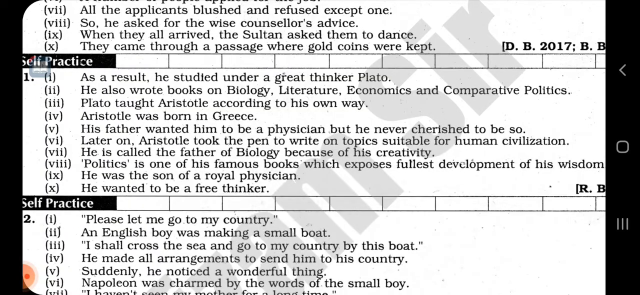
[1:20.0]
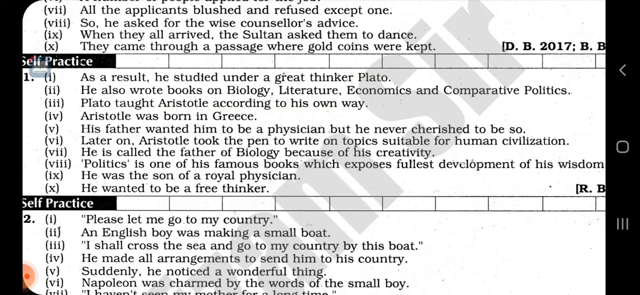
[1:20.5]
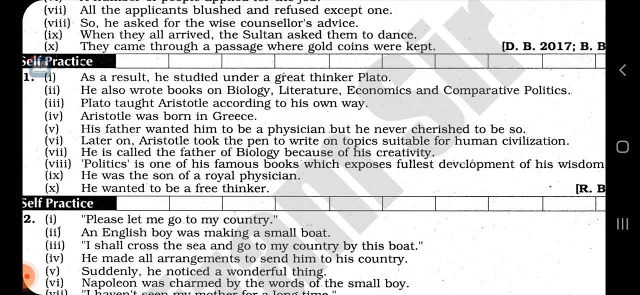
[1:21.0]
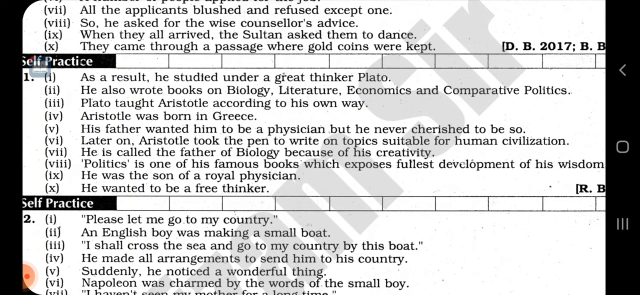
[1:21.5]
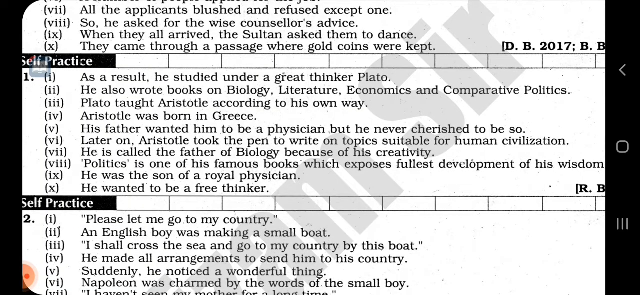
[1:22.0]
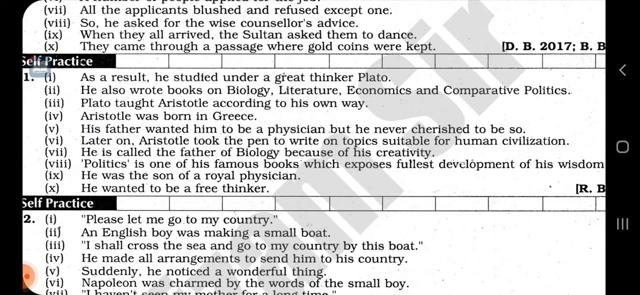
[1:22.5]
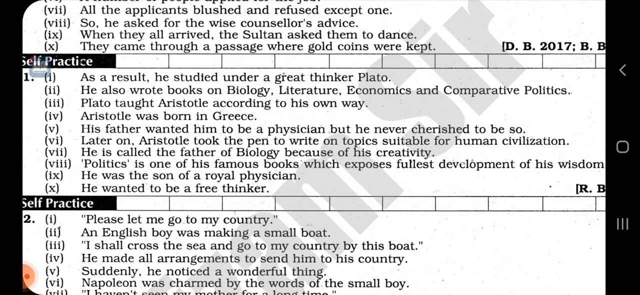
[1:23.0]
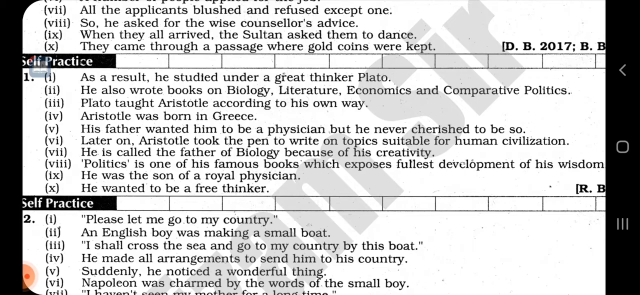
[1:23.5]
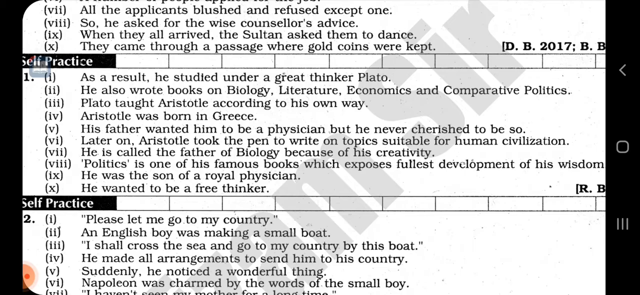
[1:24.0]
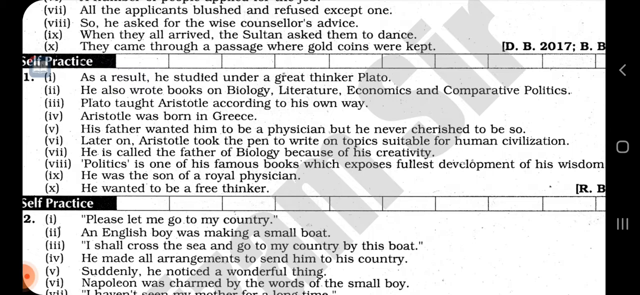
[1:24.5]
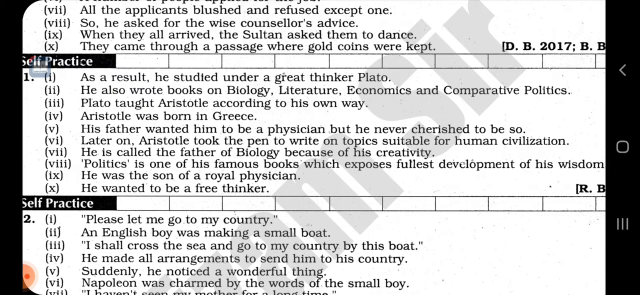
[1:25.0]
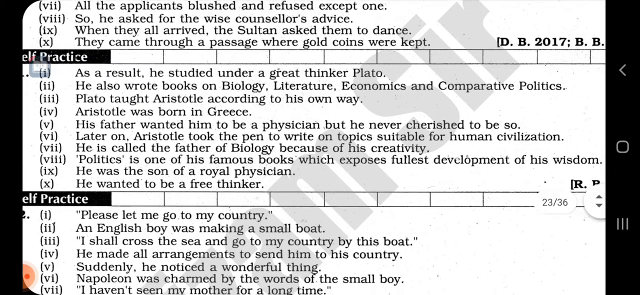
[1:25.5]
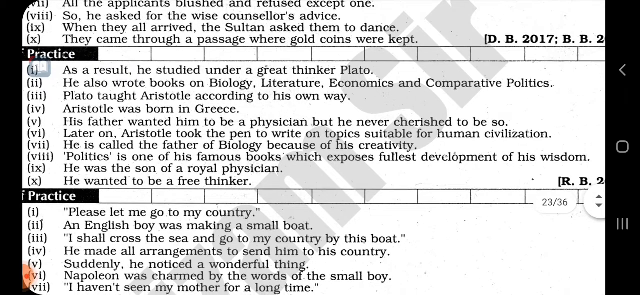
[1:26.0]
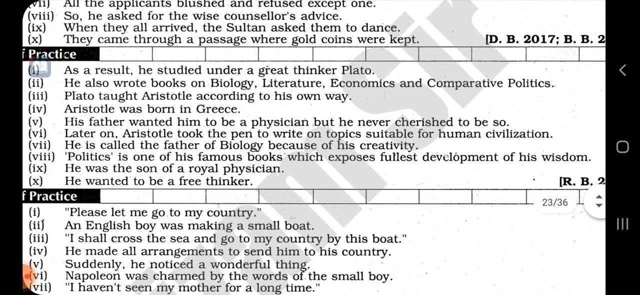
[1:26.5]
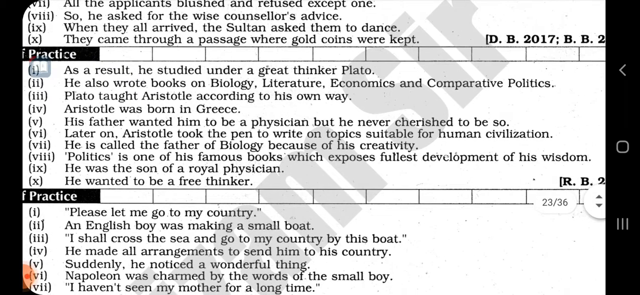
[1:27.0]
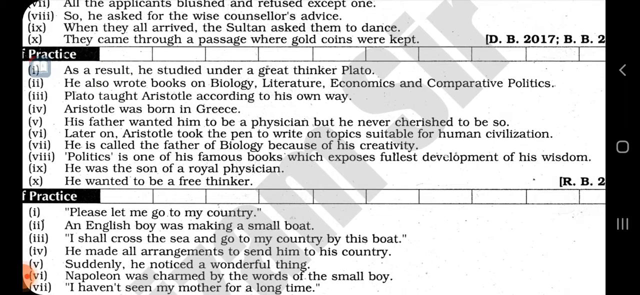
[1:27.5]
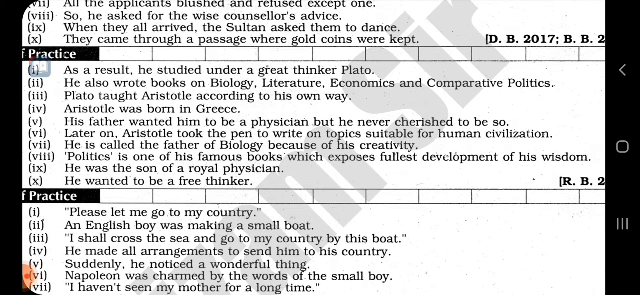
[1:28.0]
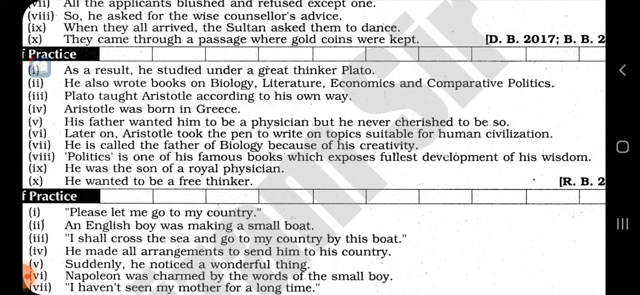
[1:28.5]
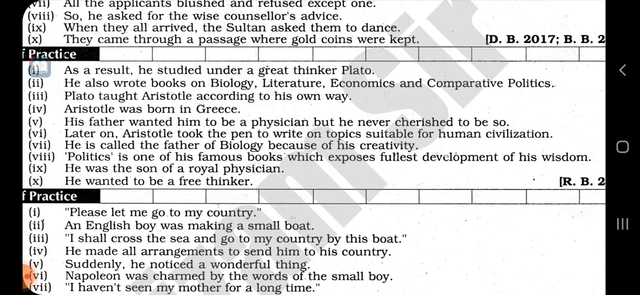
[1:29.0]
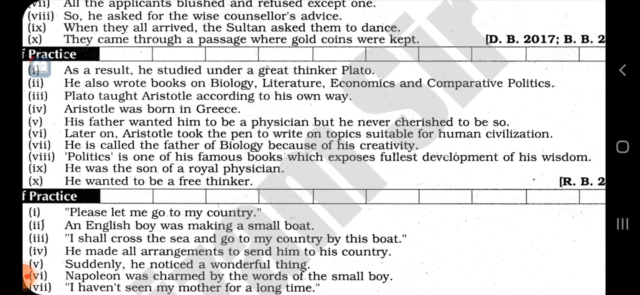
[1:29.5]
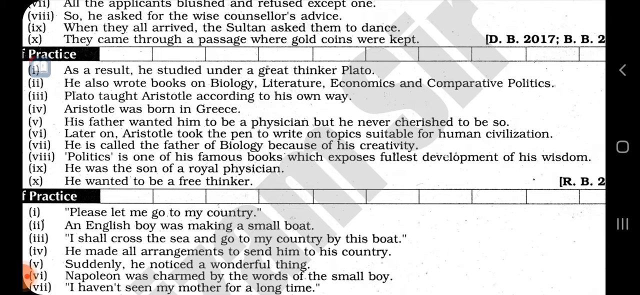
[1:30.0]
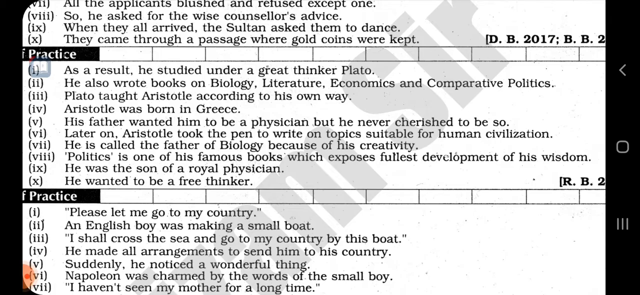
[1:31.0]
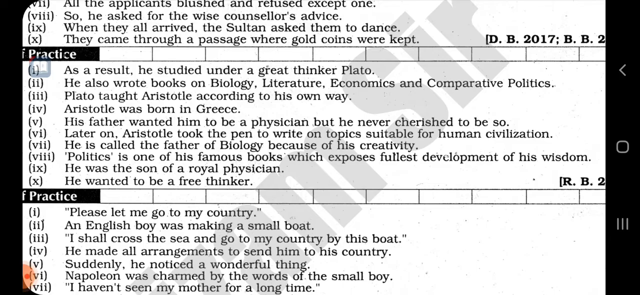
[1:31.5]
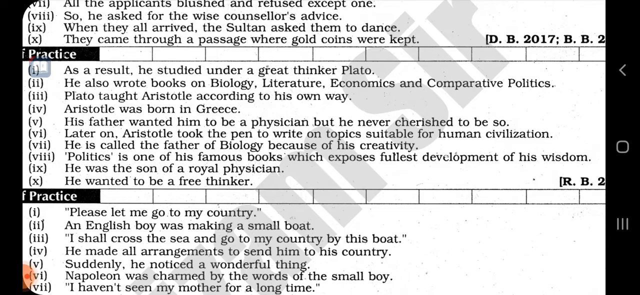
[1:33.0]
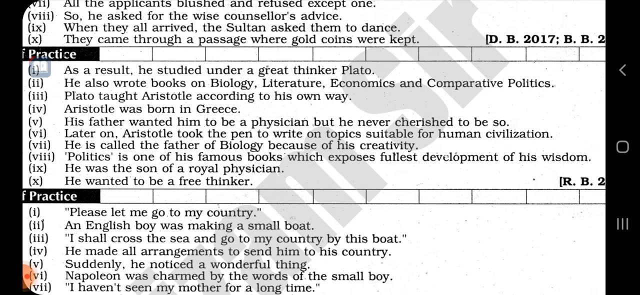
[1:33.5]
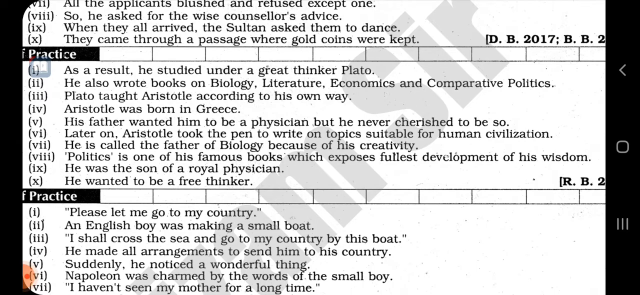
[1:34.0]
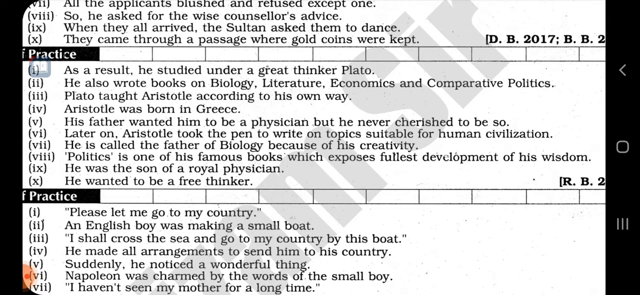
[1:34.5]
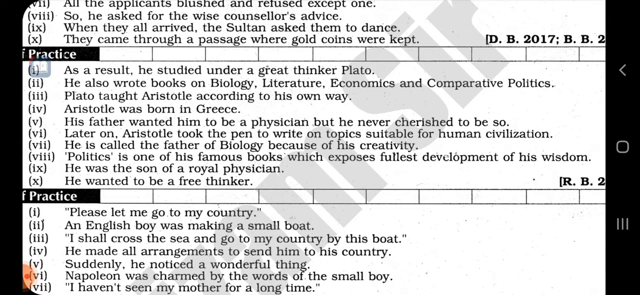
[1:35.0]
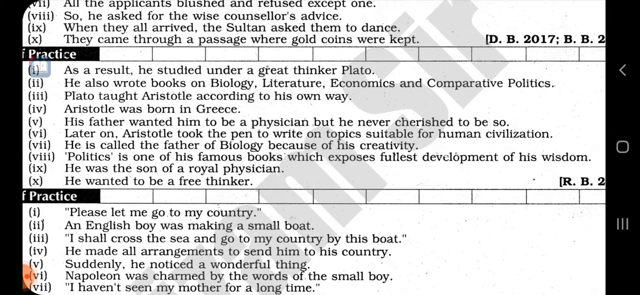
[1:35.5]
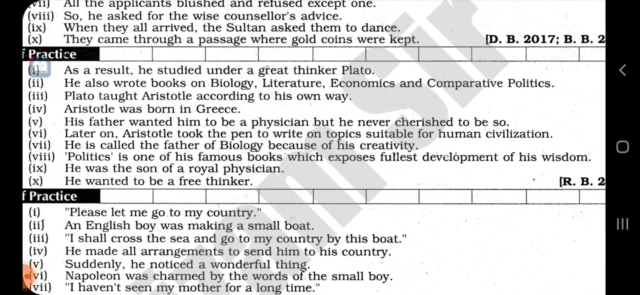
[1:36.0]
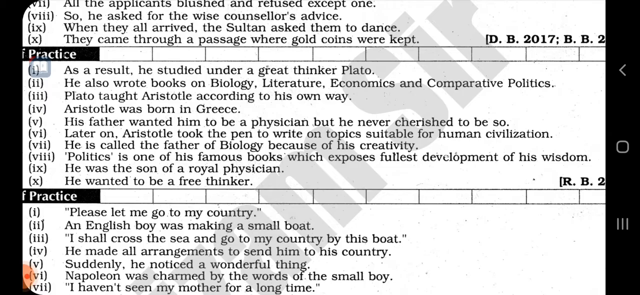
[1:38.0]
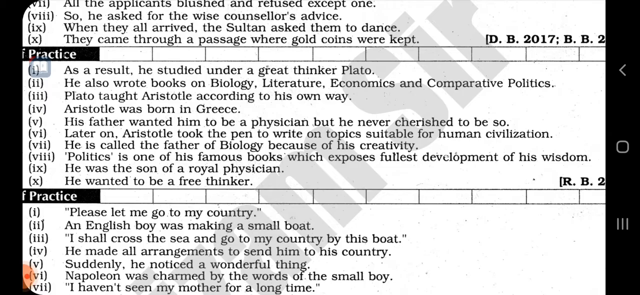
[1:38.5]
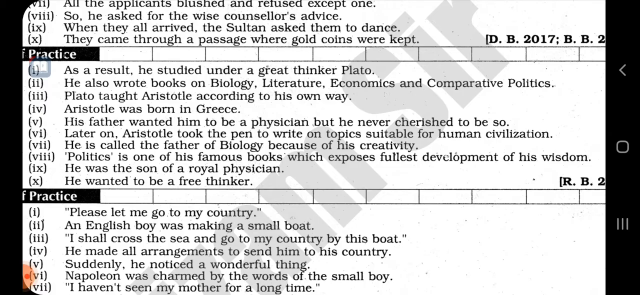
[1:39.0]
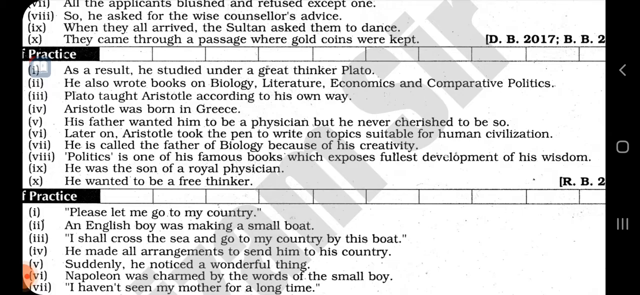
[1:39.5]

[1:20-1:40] The small red dot inside a bigger red dot is visible once again. The view zooms in slightly so the question numbers are hidden once again, leaving only the Roman numerals of the options, which are evenly spaced. After this initial zoom the setting does not really change: the background stays black, with black text on a white page inside it. The reference for question 10 reads "D.B.2017BB" with the year cut off, and the reference for question 11 has the initials "RB." The boxes next to the words "self practice" are all the same size as the box containing "self practice," and the words "self-practice" follow each question or set of numbered options.